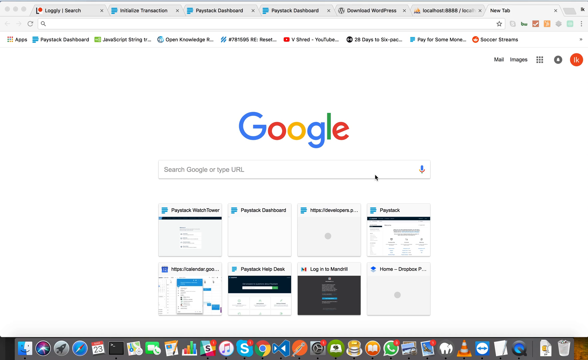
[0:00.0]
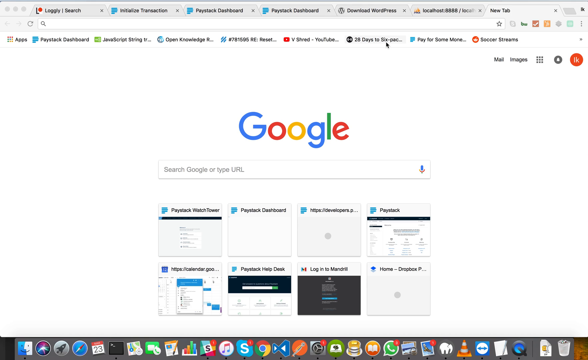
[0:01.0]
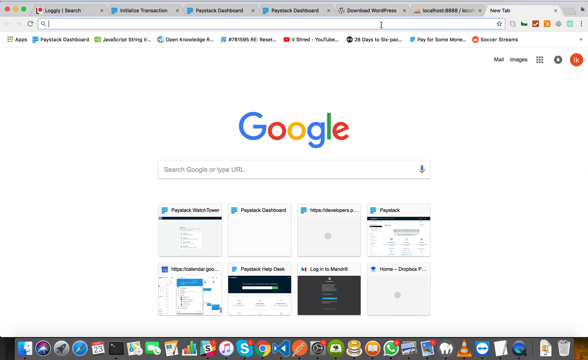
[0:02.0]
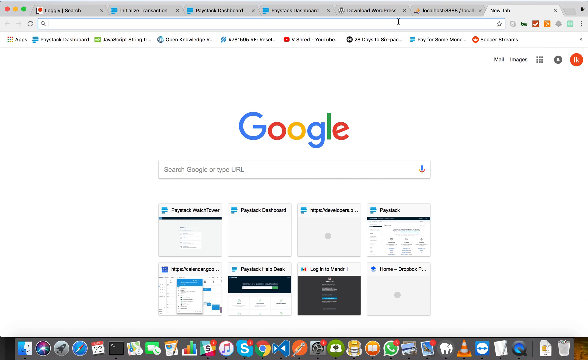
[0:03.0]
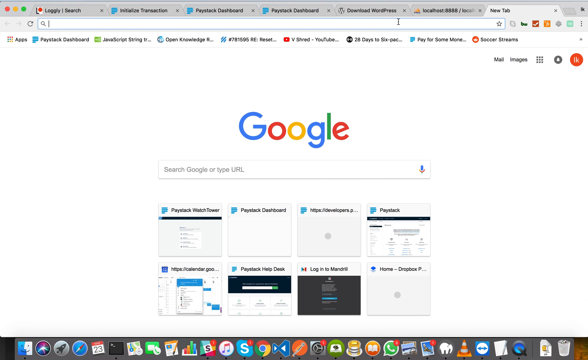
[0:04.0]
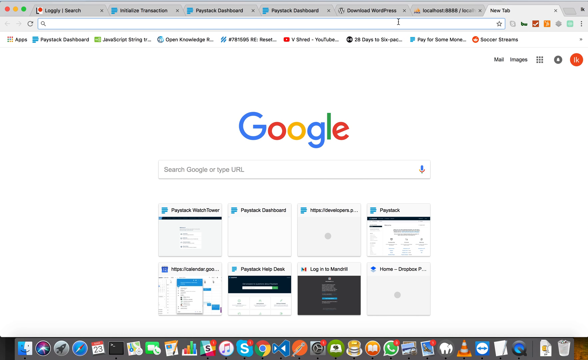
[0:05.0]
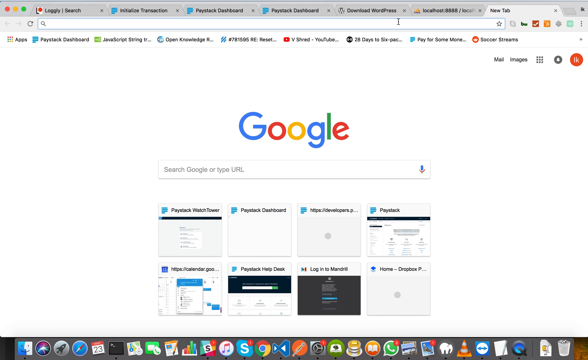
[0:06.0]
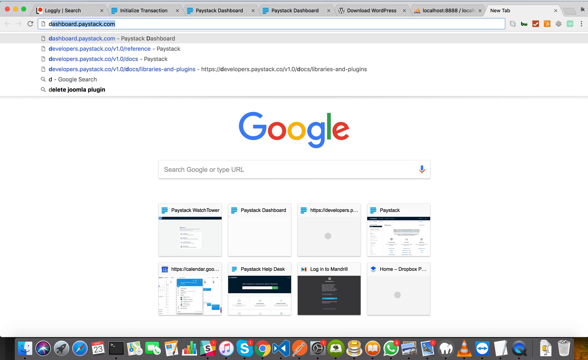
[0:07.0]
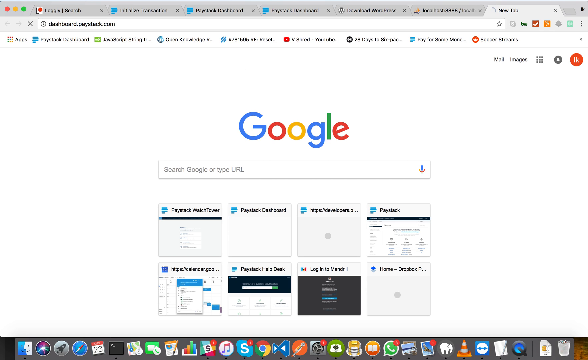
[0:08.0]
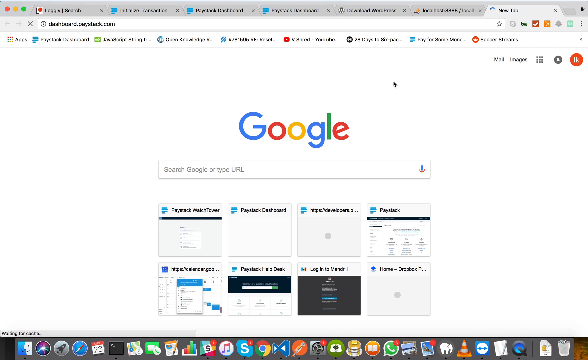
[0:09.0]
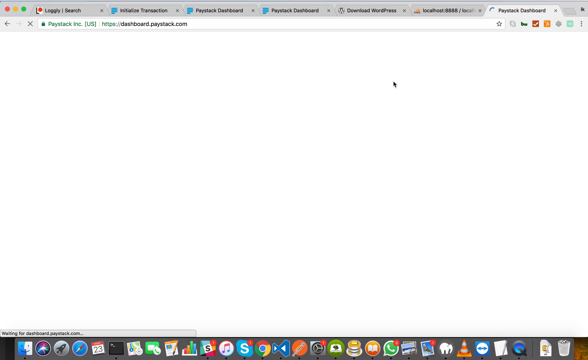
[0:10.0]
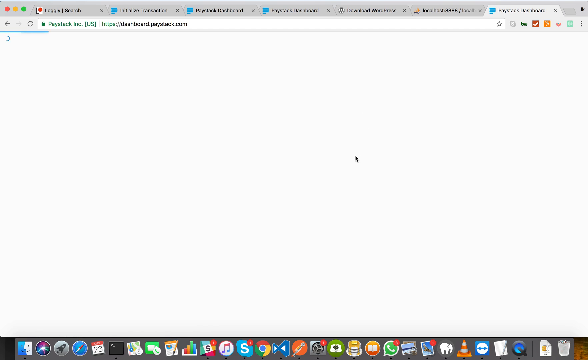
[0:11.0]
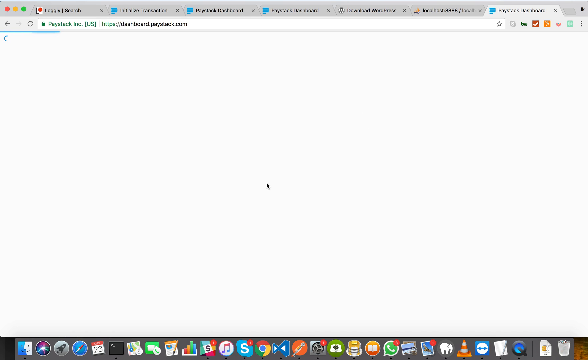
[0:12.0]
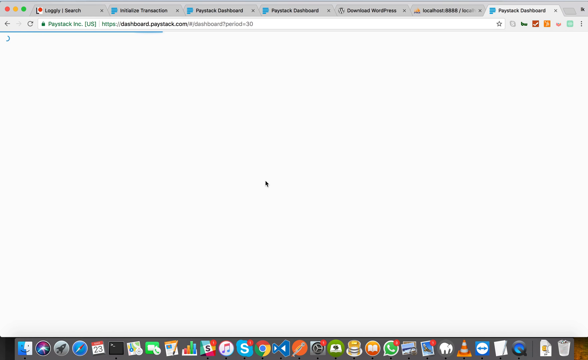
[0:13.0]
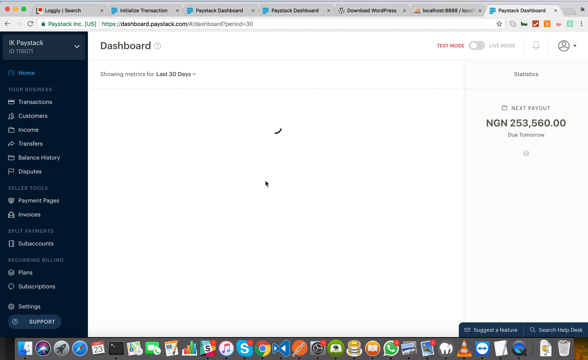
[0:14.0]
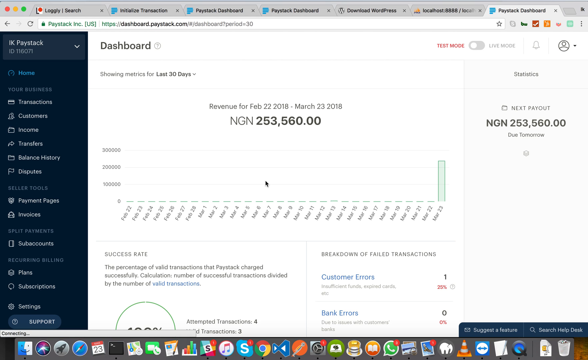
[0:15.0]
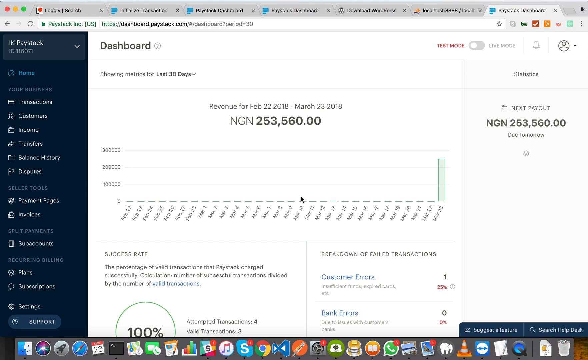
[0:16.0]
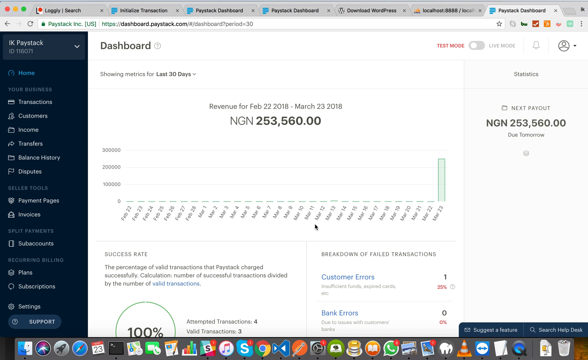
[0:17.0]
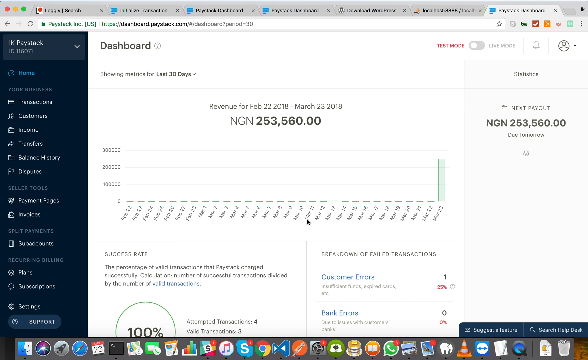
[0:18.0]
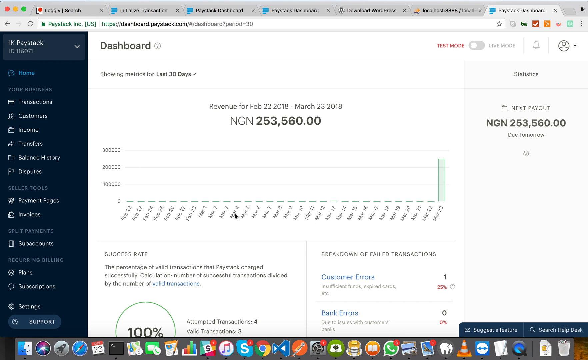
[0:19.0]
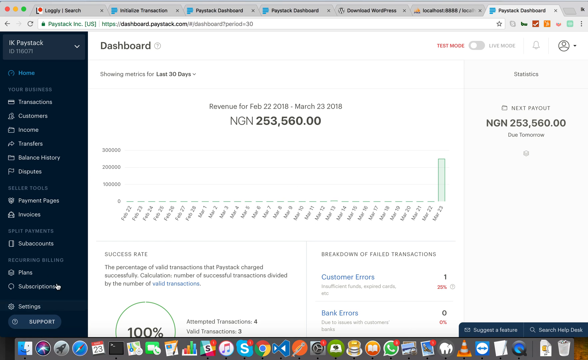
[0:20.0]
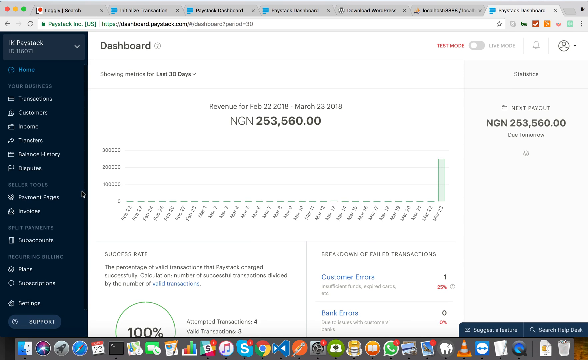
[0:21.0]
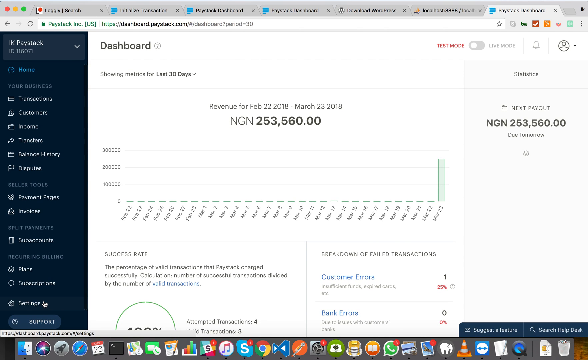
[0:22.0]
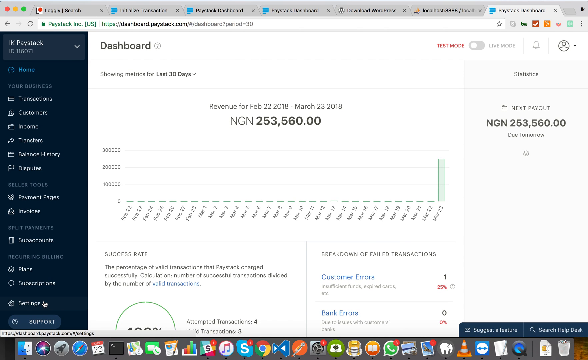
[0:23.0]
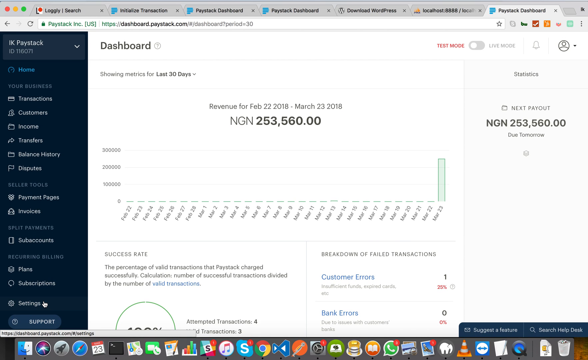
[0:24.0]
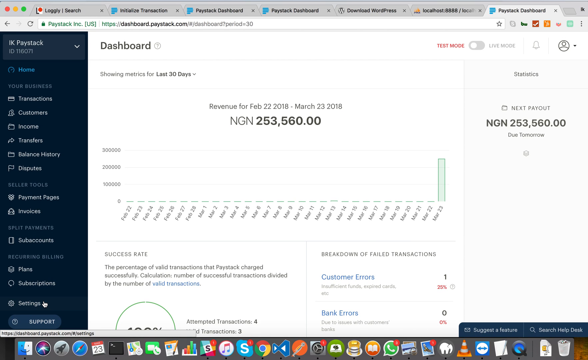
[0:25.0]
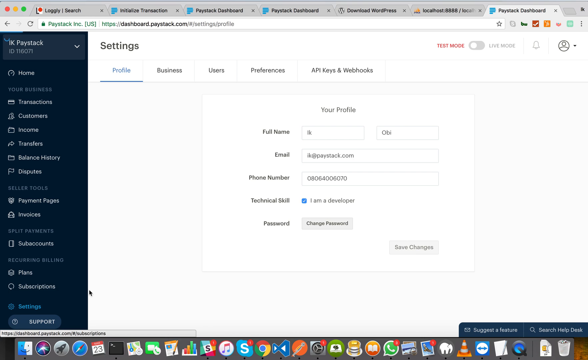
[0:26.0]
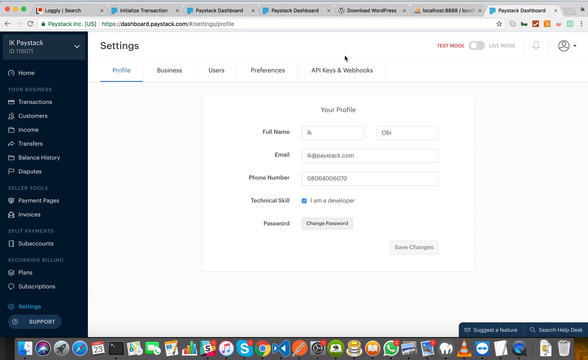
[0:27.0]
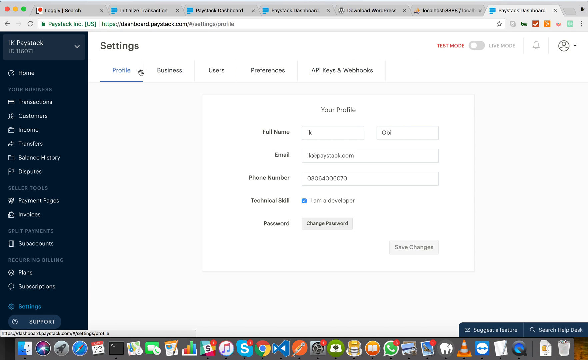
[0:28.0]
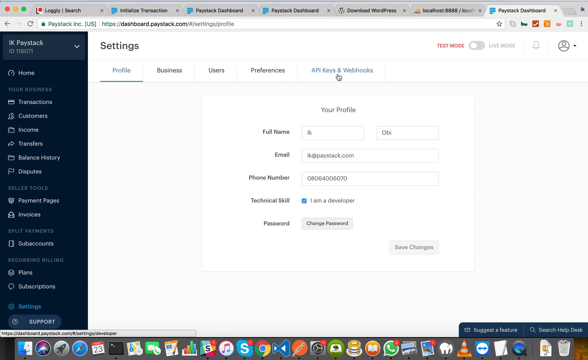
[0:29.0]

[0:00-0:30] The video opens on the main Google search page in a web browser. Across the top of the browser, besides this new tab with the Google search bar, about six other pages are open. A mouse cursor moves around the screen, and someone searches in the search bar at the top. The screen changes to a dashboard that says "Dashboard" for Paystack Incorporated, showing revenue of 253,000 for February 22nd, 2018 through March 23rd, 2018. The person flips through profiles. The profile information shows a full name, an email at paystack.com, a phone number, and technical skills, where it says "developer". The dashboard for IK Paystack also has profile settings, business settings, user settings, preferences, and websites.